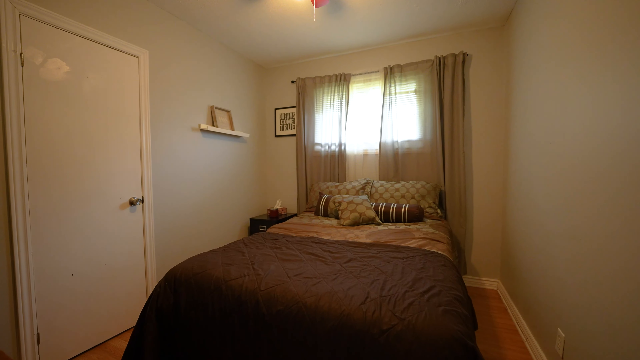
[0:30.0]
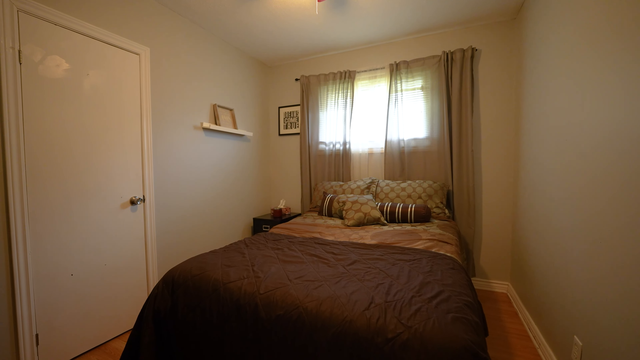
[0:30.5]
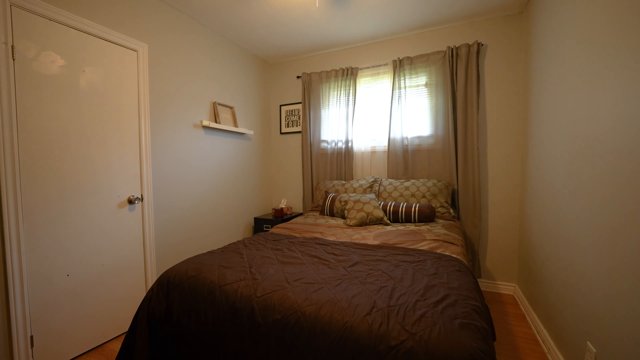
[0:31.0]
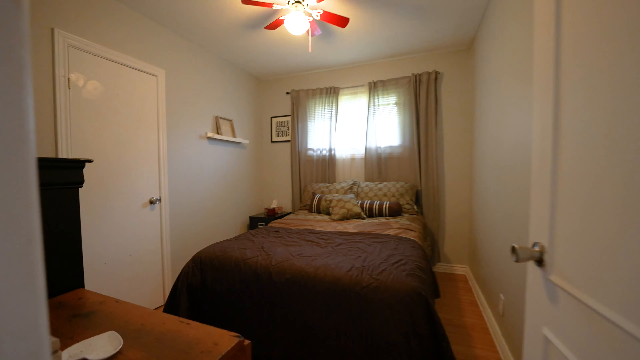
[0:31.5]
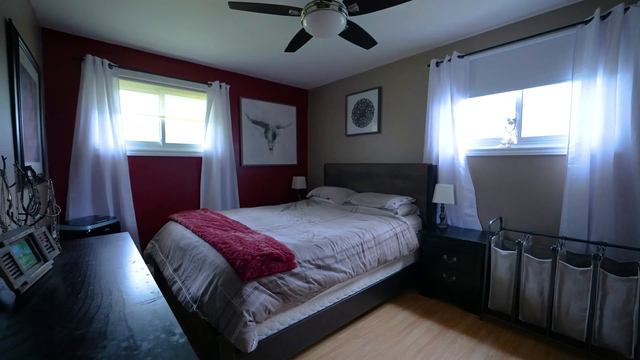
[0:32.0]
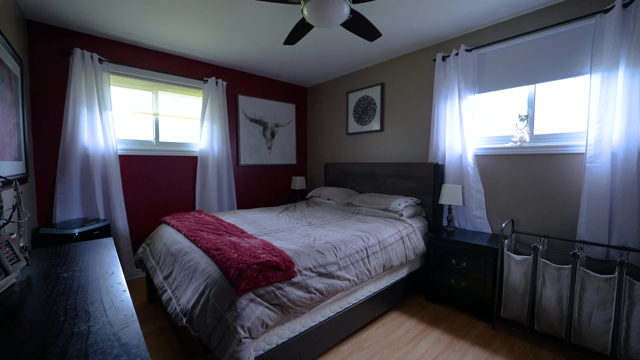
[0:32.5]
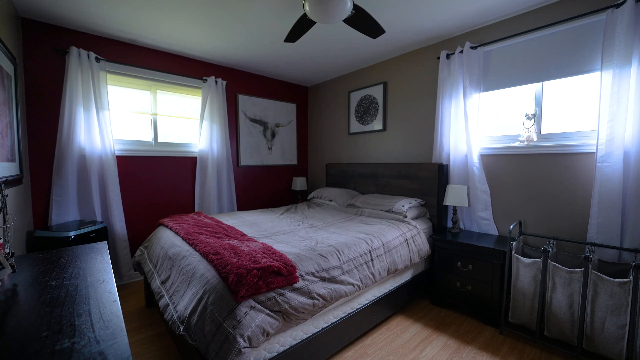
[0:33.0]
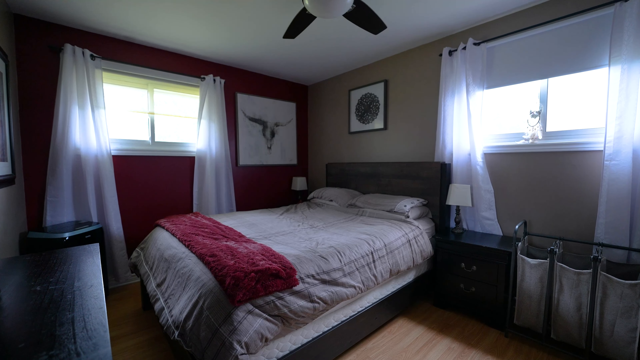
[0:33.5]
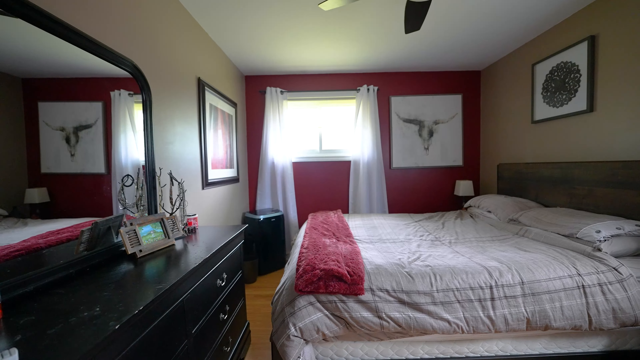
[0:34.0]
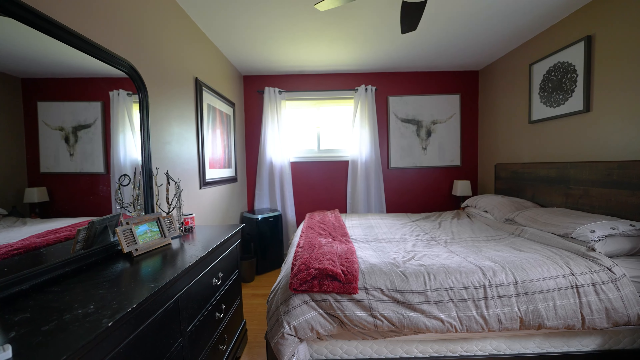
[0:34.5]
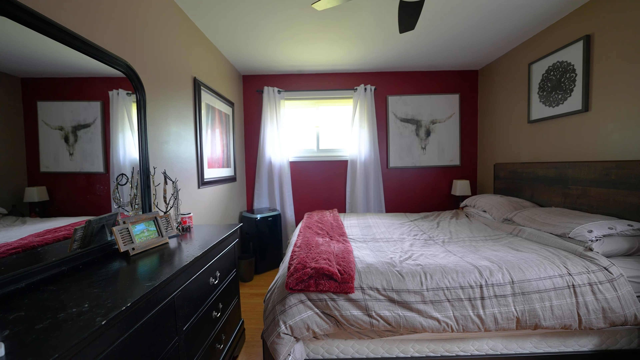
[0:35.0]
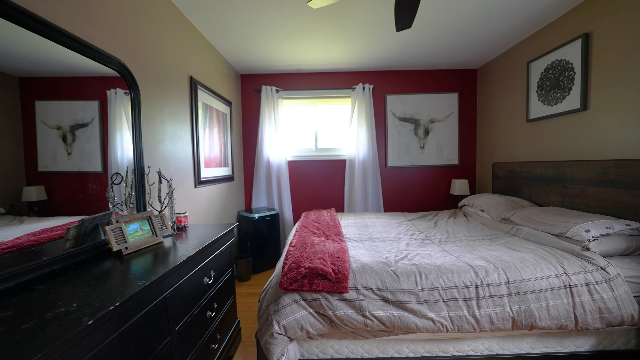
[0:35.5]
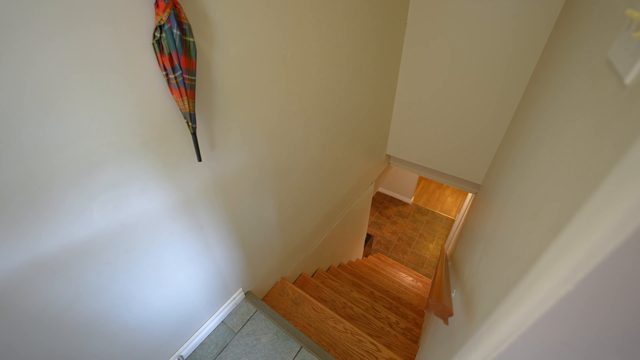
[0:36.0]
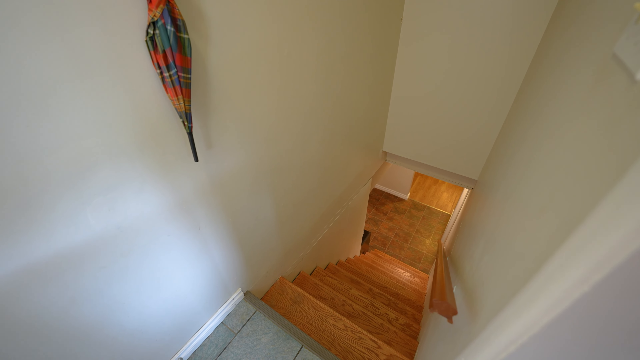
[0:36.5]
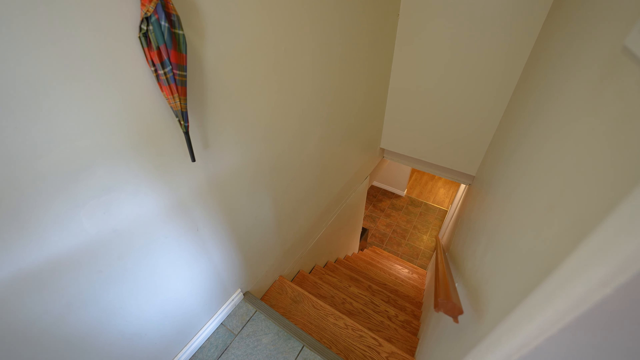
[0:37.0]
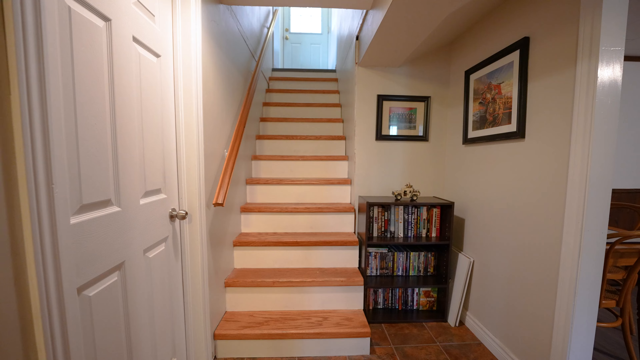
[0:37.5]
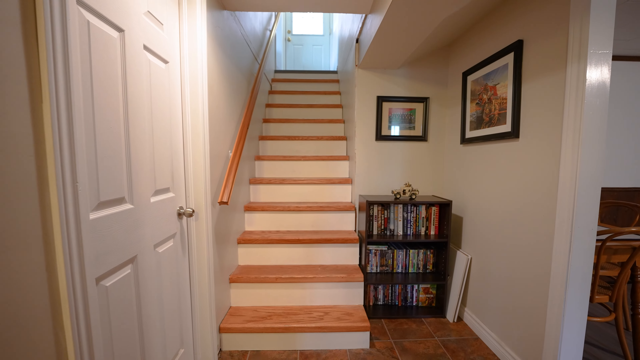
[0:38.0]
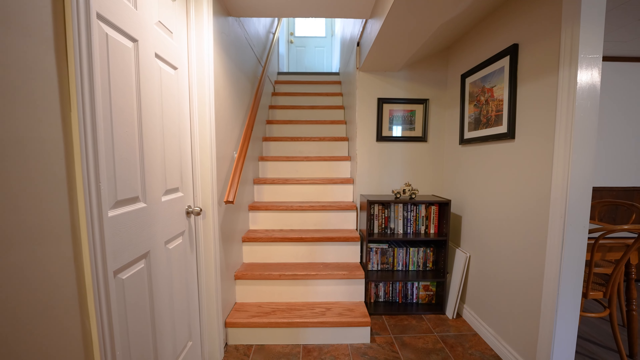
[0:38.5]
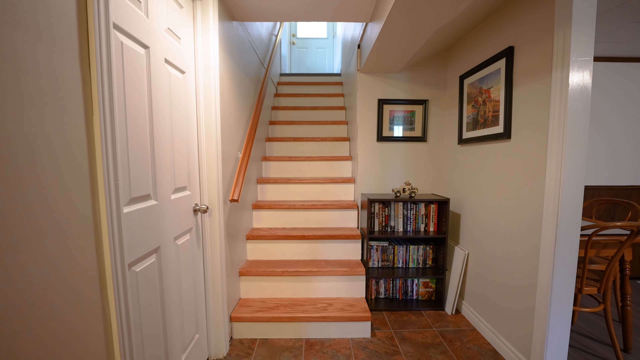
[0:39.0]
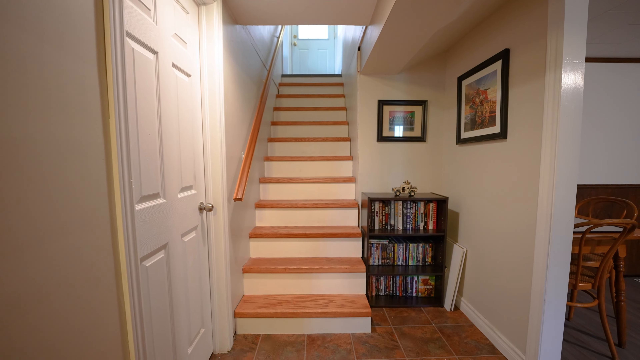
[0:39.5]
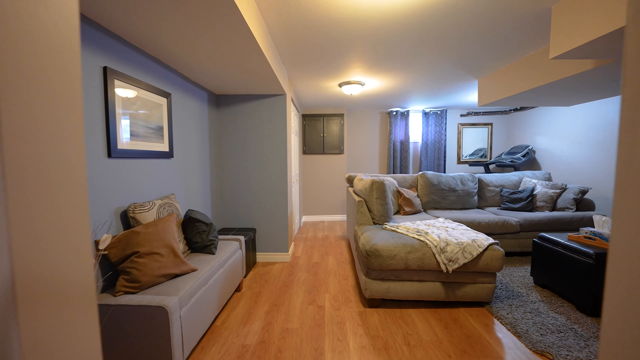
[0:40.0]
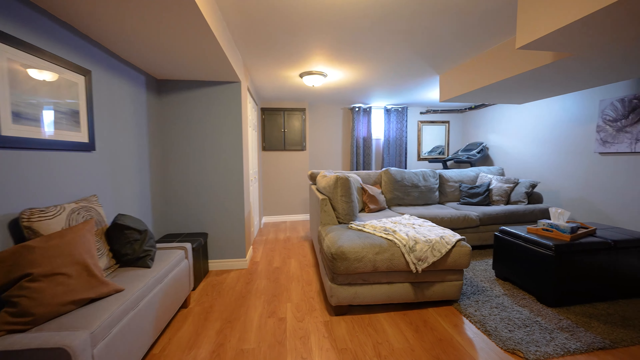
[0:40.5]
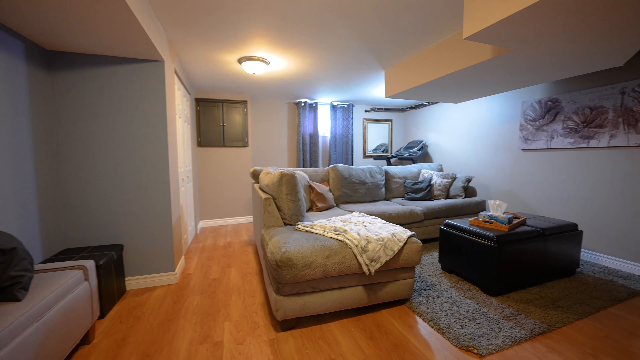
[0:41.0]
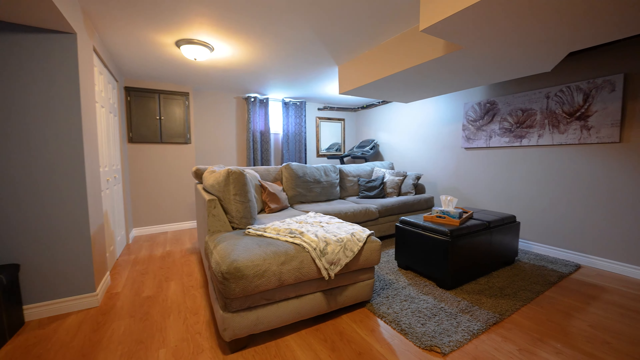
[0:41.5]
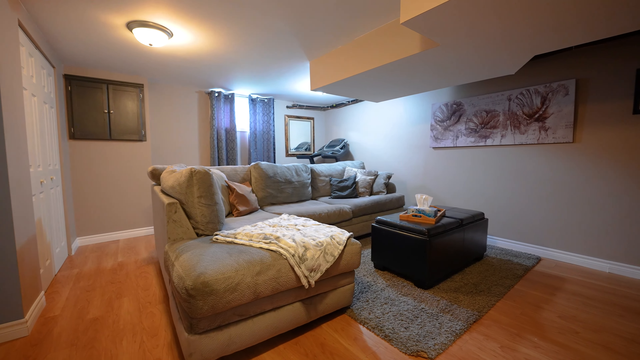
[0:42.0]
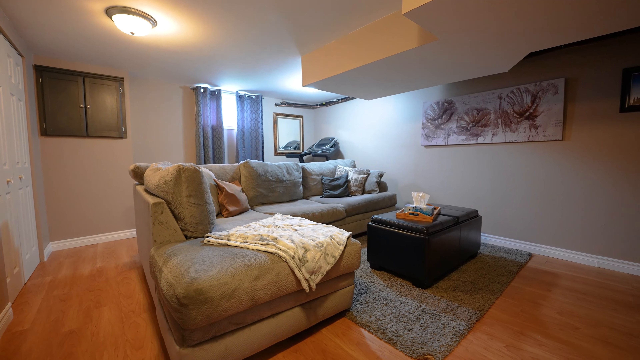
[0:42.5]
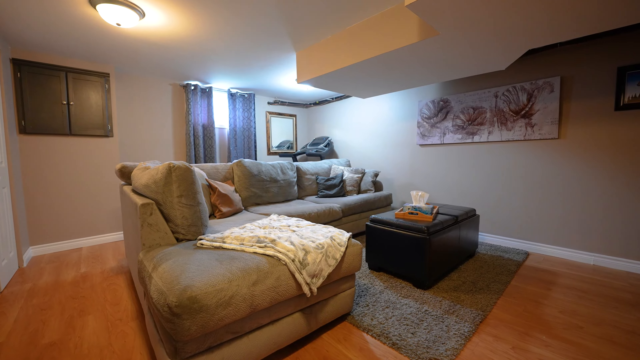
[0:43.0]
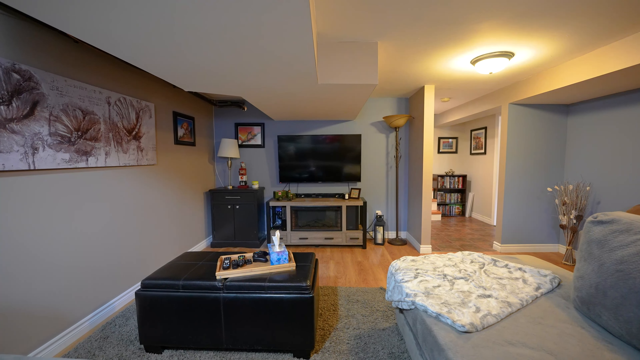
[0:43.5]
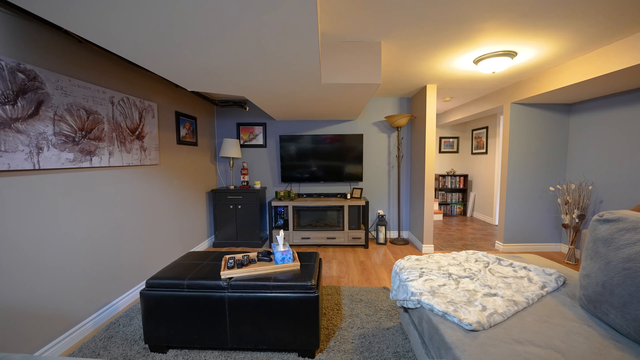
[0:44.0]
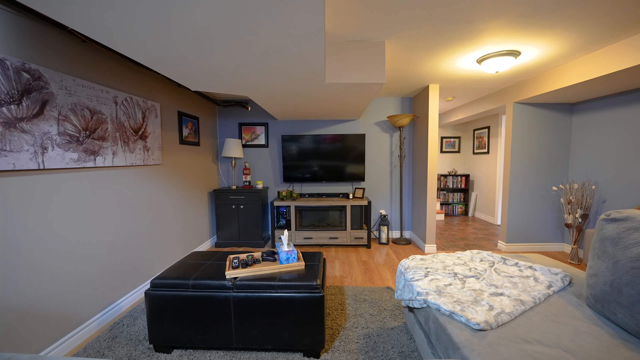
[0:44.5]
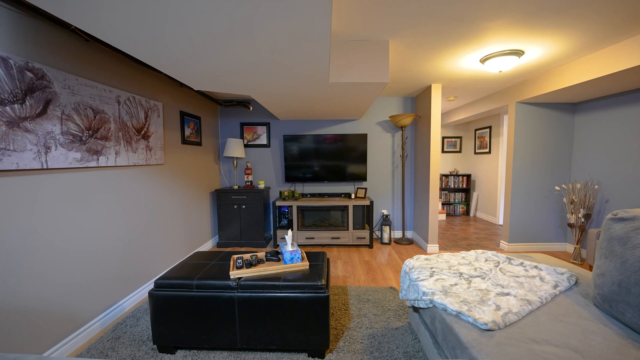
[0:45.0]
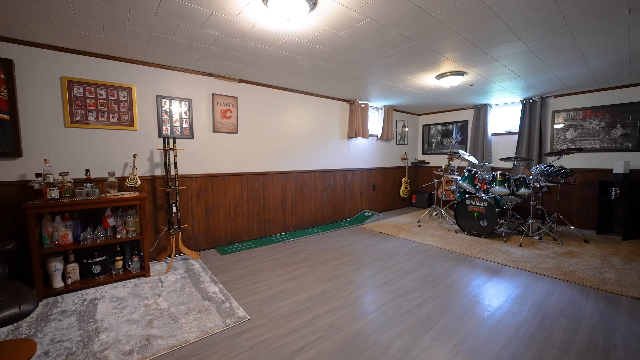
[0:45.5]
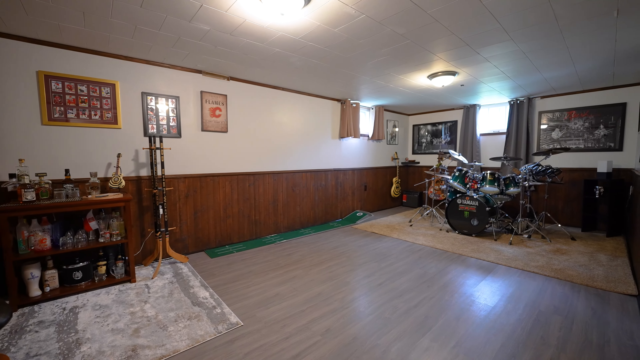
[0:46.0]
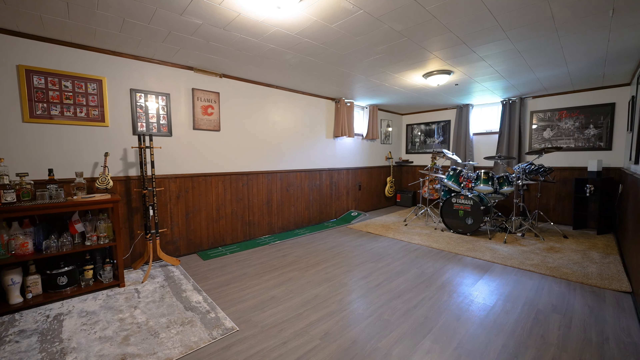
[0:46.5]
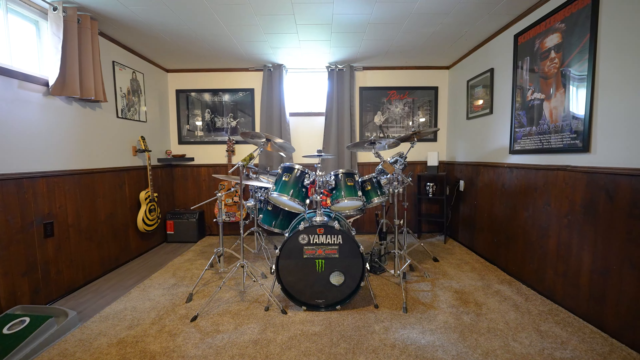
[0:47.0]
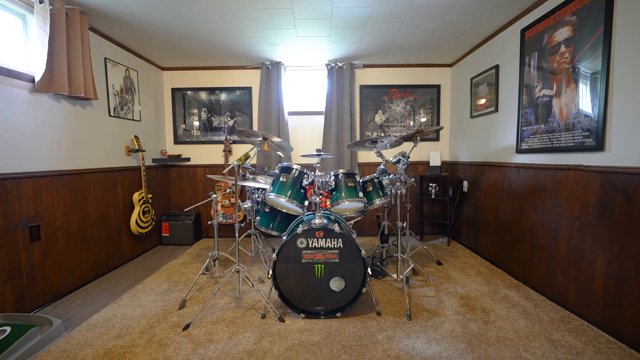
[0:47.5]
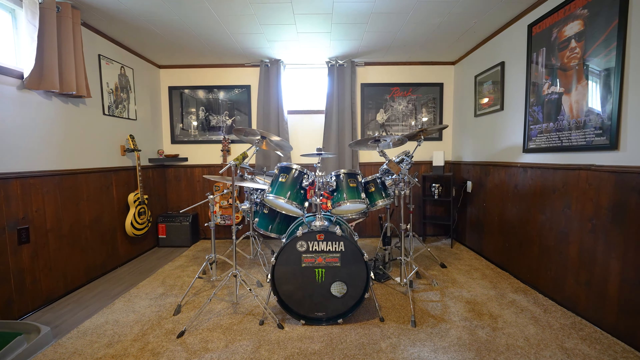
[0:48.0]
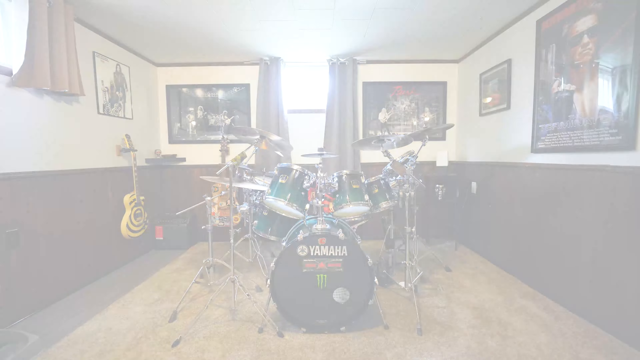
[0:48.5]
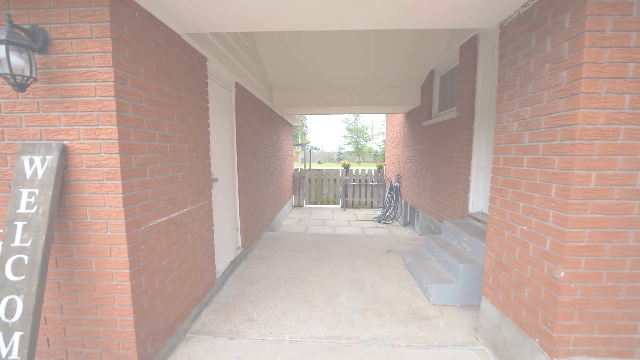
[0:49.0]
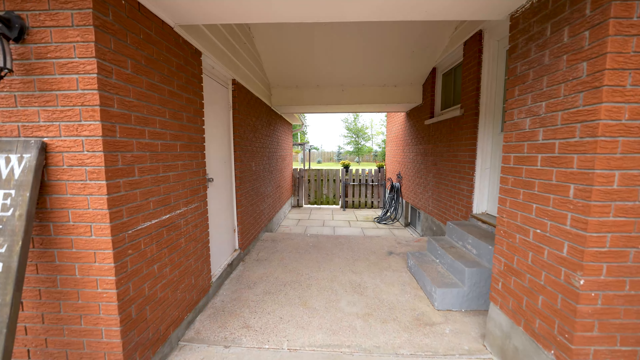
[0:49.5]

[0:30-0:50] Another bedroom is shown, very small but sufficient. Next is the master bedroom with a queen-size sleigh bed; the decoration is described as beautiful and the walls are off-white. A staircase leads up to more rooms. Upstairs there is a living space that could easily be made into a man cave. A very large upstairs room holds Yamaha drums, seemingly set up as a studio.